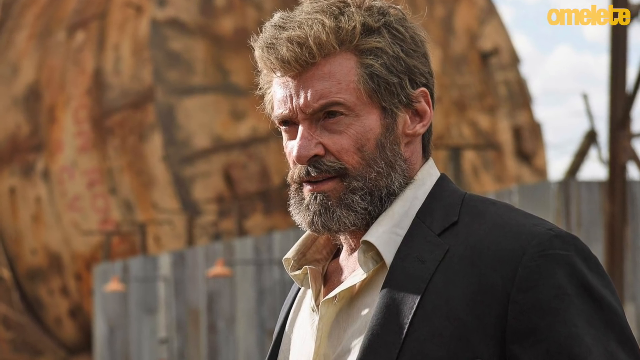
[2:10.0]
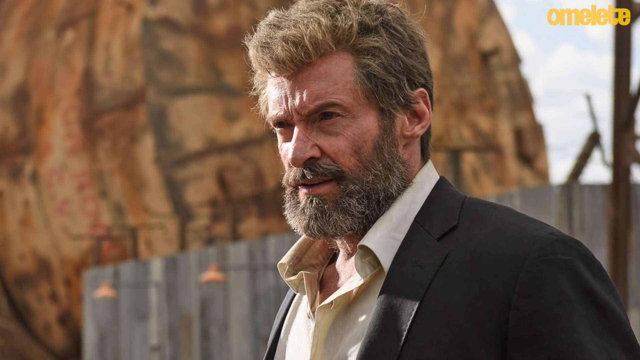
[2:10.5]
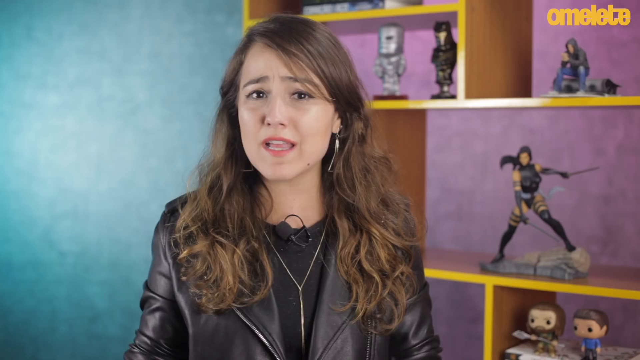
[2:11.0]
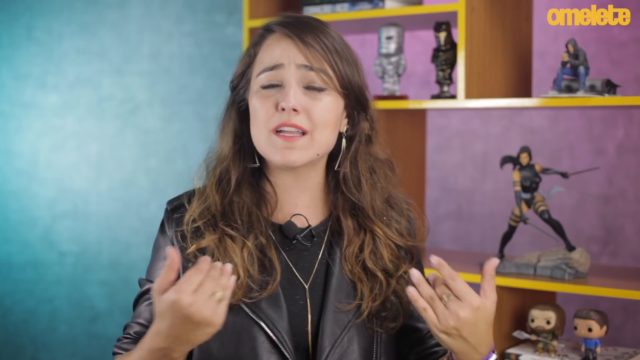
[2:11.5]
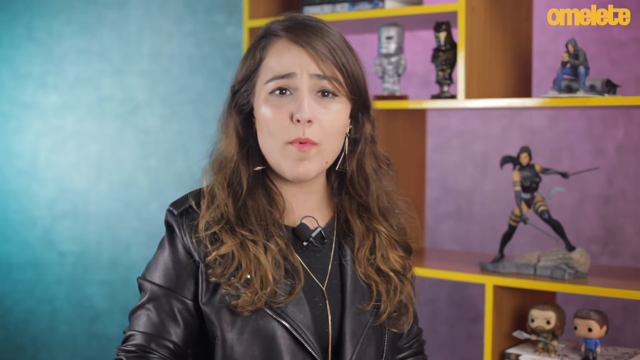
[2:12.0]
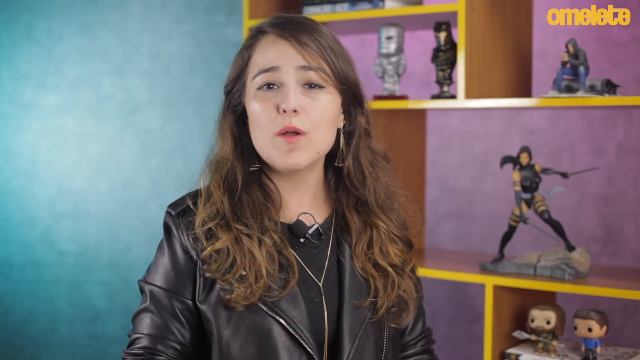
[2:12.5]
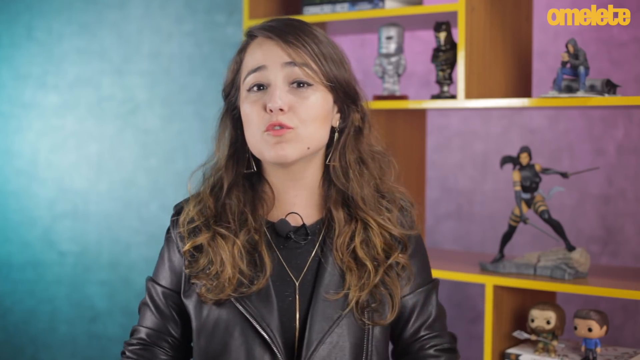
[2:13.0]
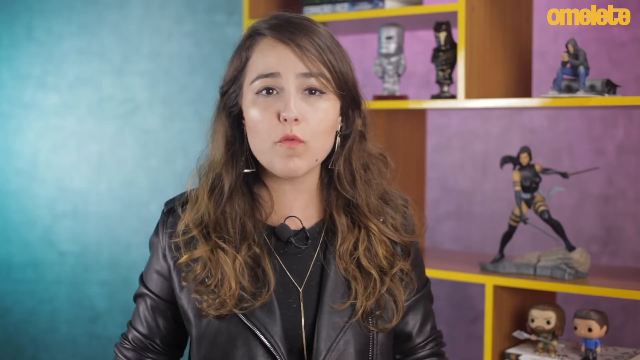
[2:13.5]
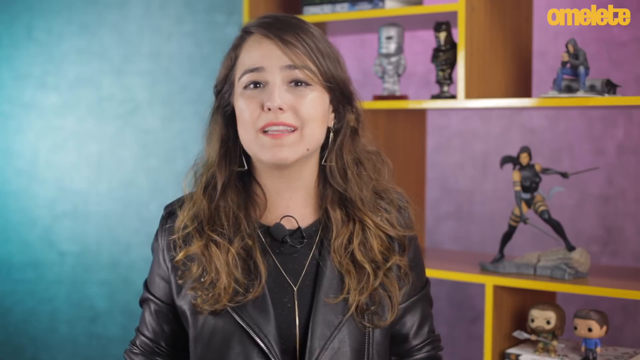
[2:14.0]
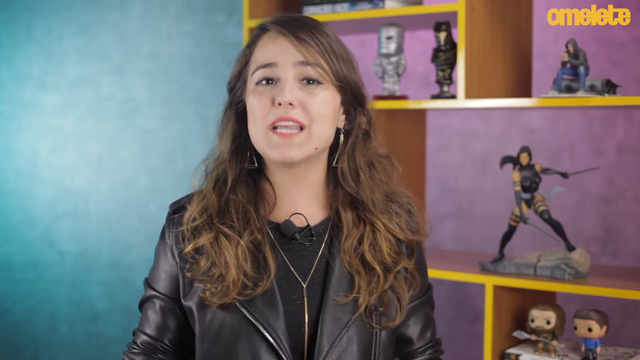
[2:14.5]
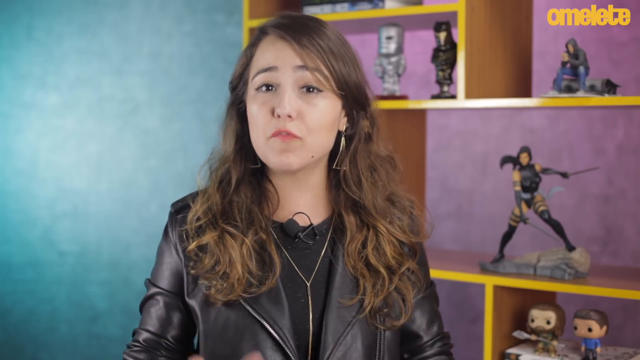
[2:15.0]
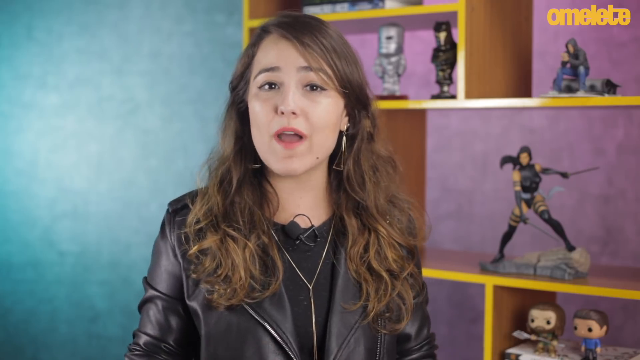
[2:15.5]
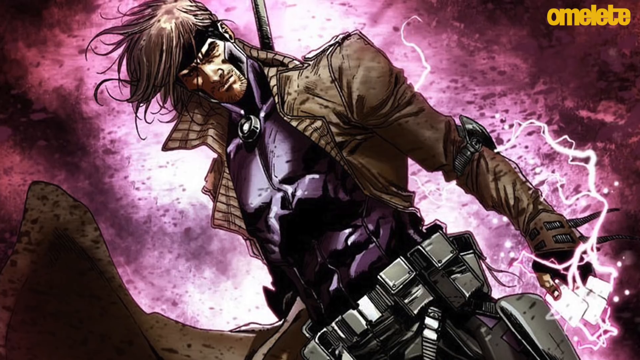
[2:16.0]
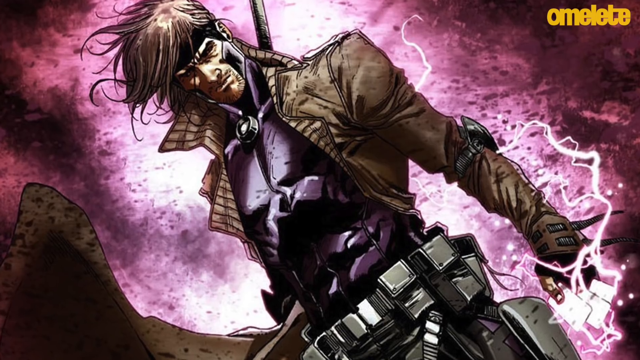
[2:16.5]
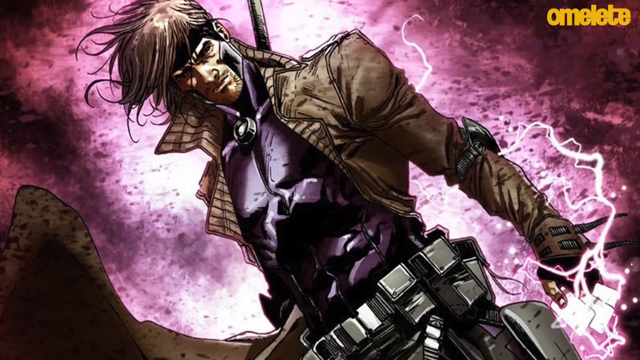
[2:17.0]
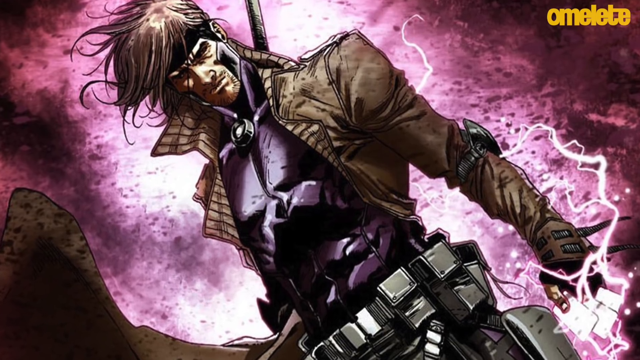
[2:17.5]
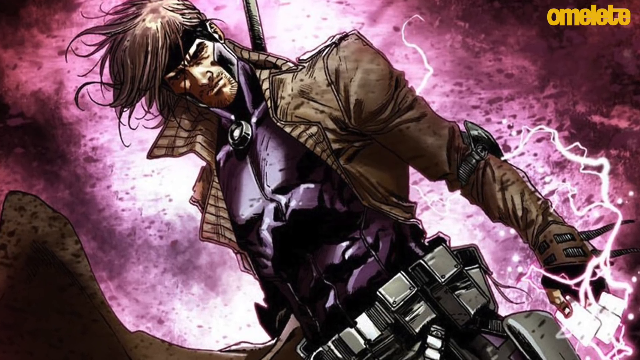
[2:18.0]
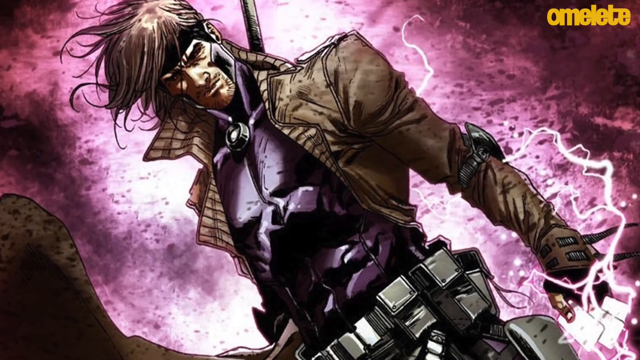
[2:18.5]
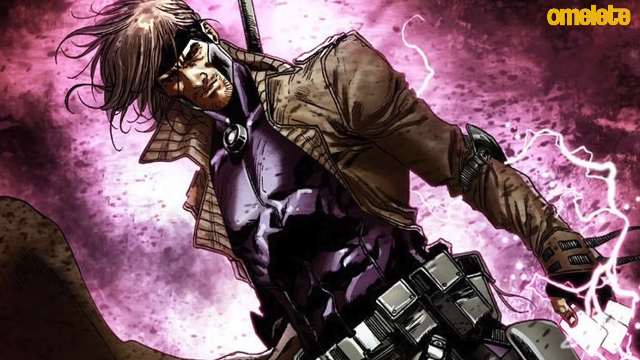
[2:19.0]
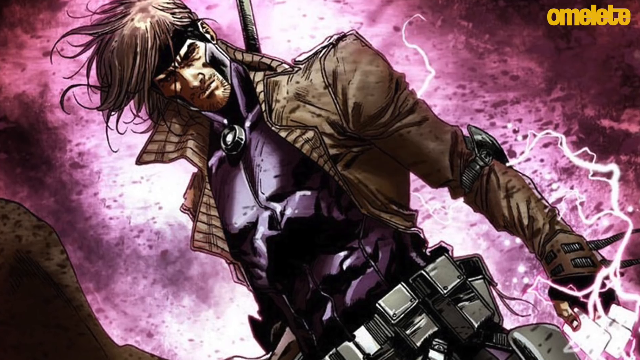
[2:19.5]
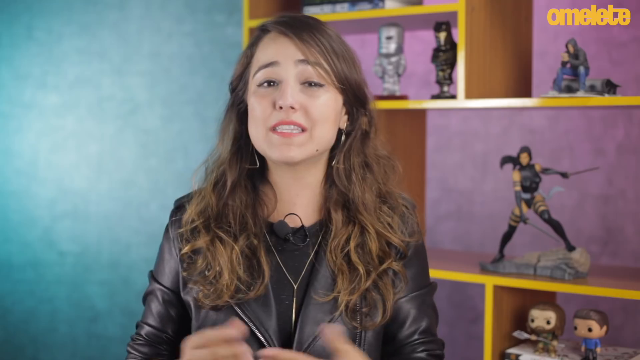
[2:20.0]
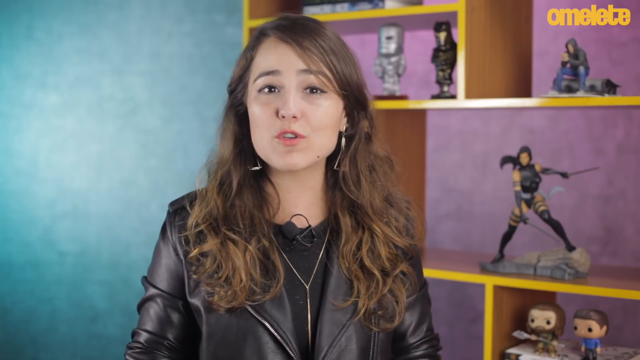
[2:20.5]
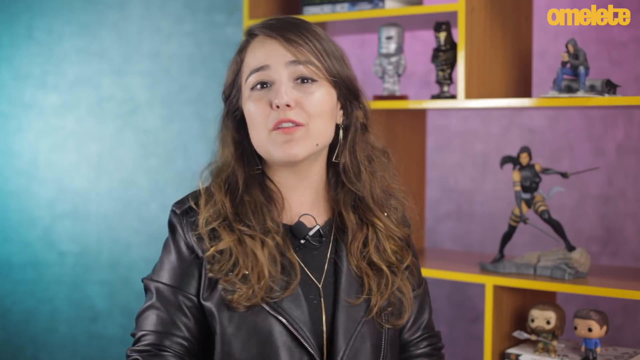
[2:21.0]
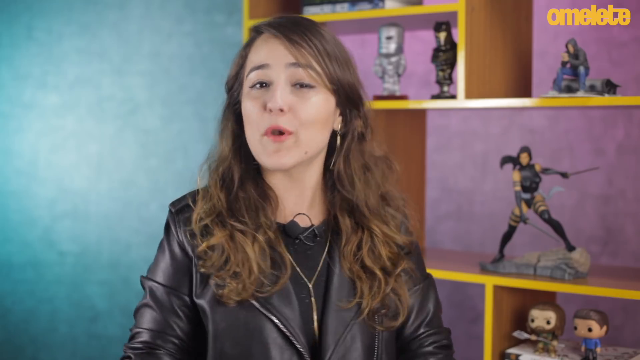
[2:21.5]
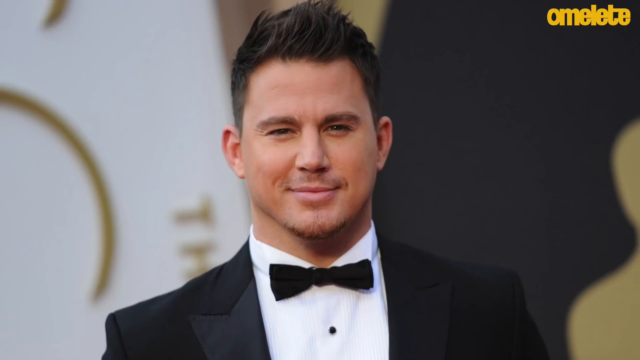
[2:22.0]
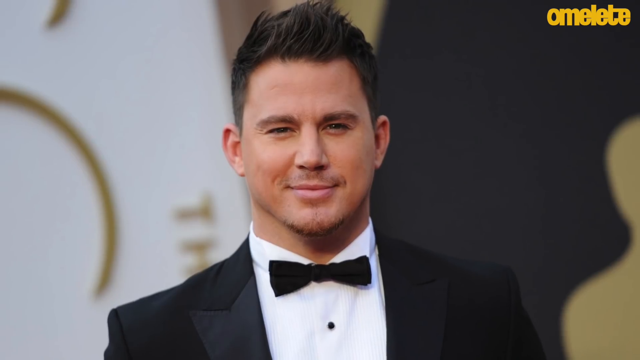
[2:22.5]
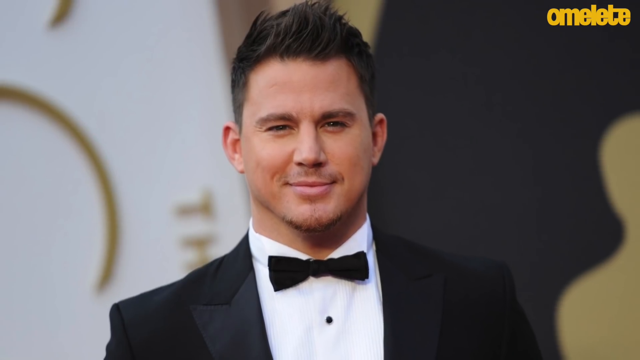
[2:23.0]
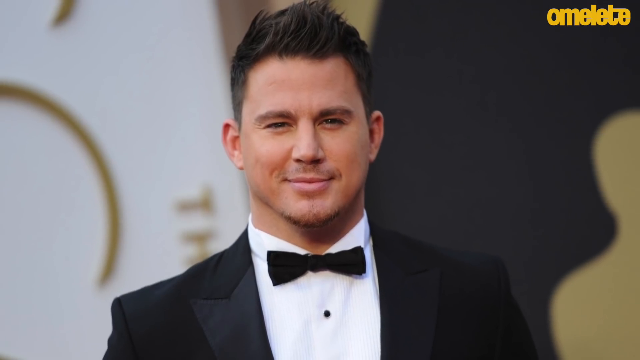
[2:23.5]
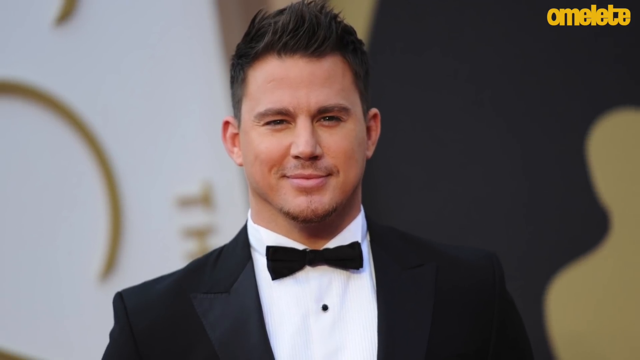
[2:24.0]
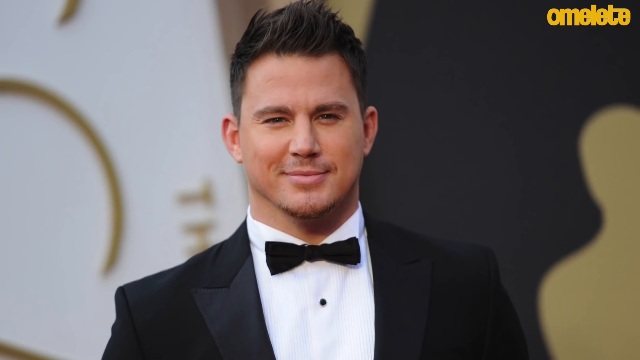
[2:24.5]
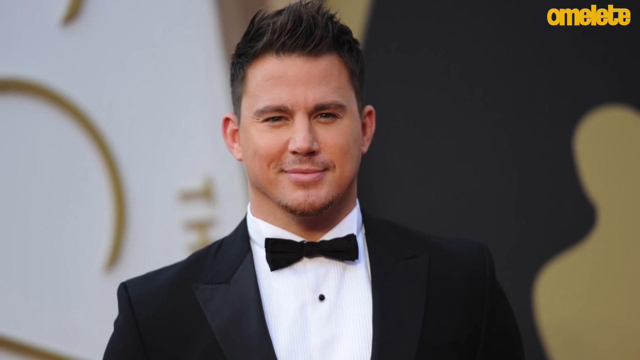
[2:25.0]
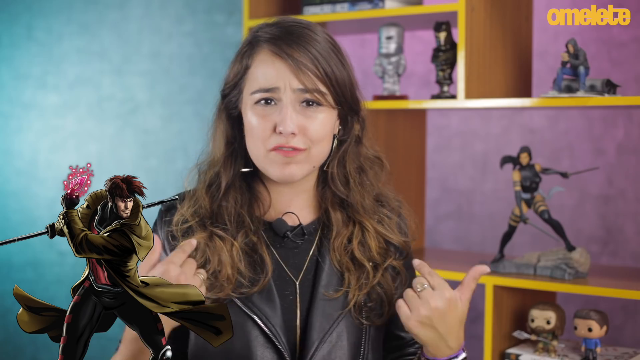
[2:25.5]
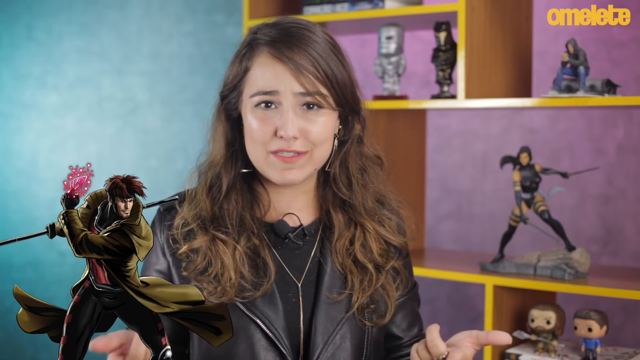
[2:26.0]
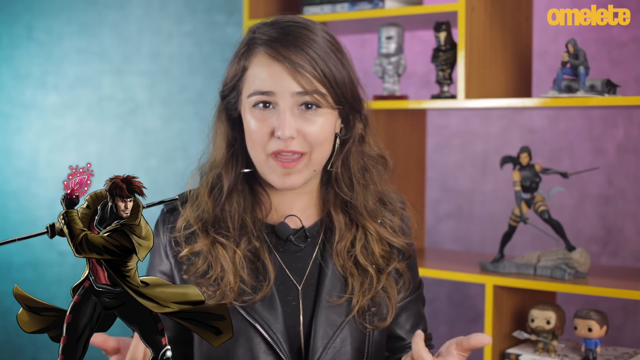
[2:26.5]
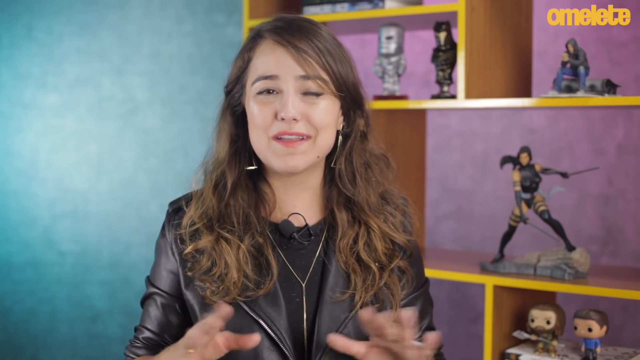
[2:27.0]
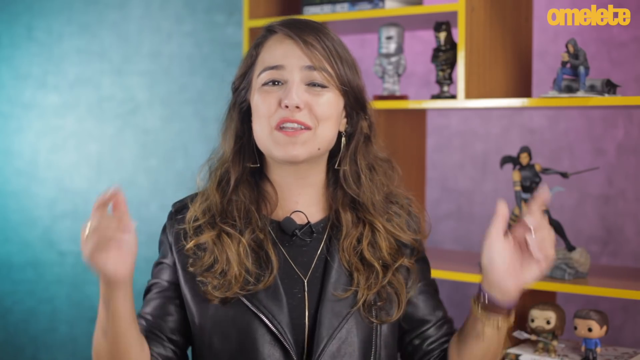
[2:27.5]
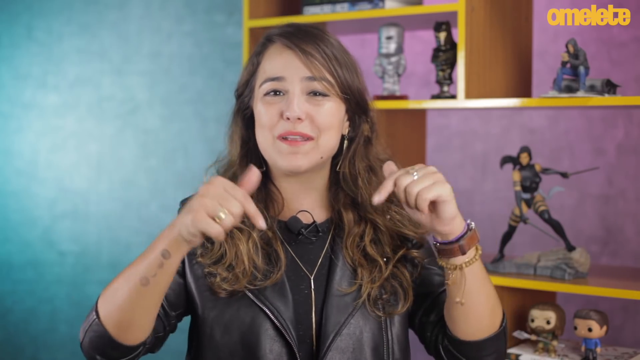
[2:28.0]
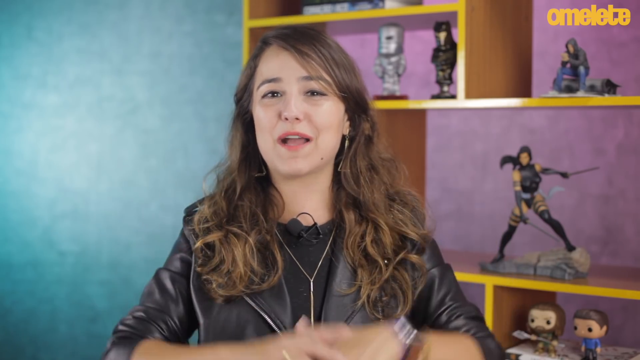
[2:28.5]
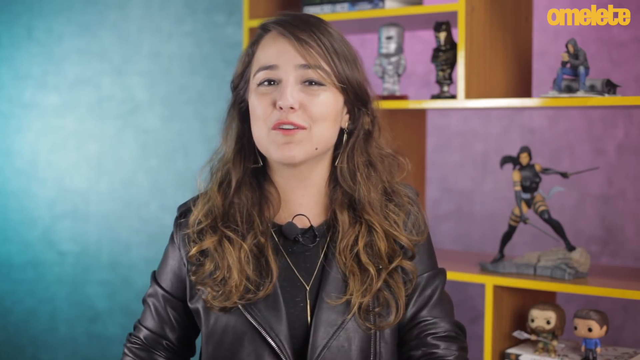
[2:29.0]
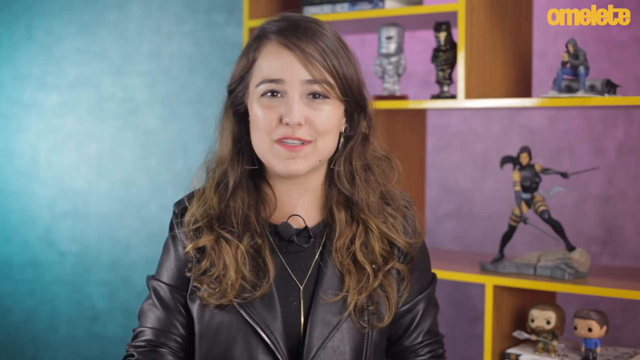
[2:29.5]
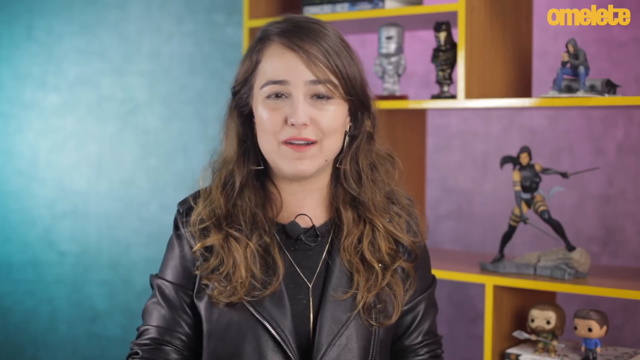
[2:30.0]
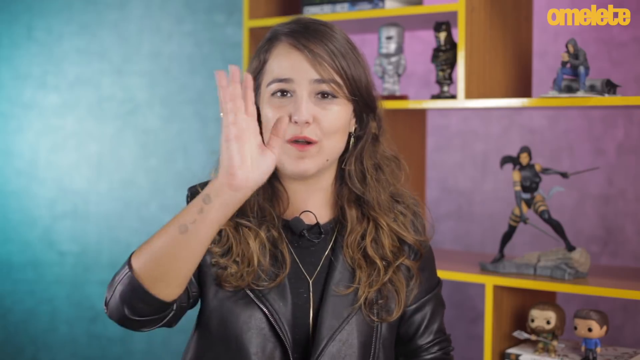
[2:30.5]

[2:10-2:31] The seasoned Logan is shown, then the video switches to the woman talking to the camera briefly, then to the X-Men character seen earlier in animated form. After the woman is shown talking again, a real man faces the camera, possibly the actor who plays that animated X-Men character. The woman is shown talking again and then waves at the camera as if saying goodbye. The video seems to be the woman critiquing films based on their main characters and other interesting characters, showing only pictures of the characters.